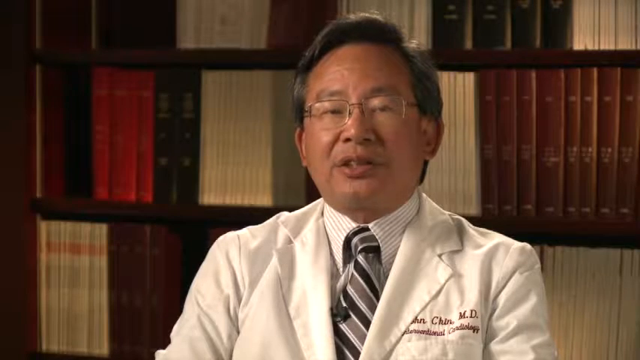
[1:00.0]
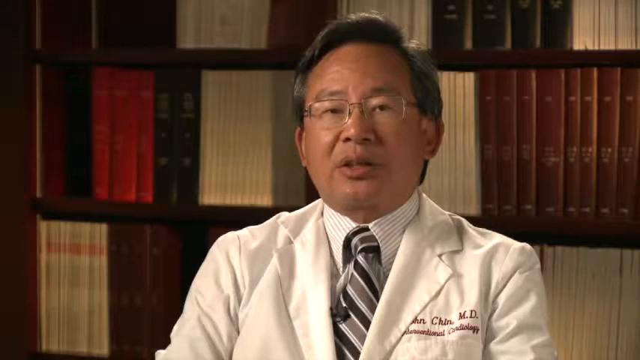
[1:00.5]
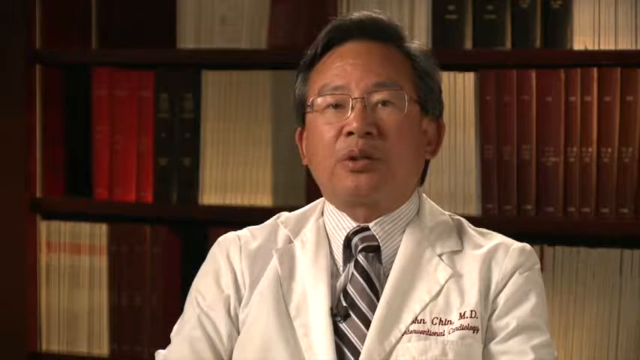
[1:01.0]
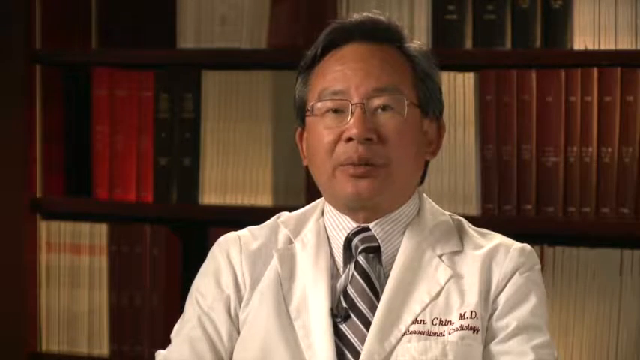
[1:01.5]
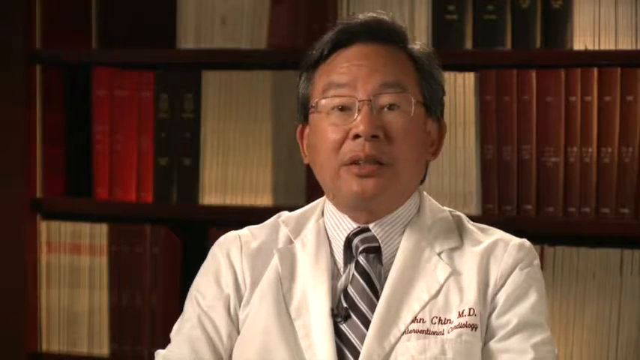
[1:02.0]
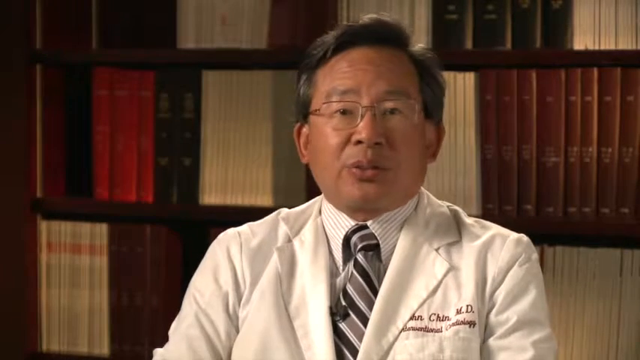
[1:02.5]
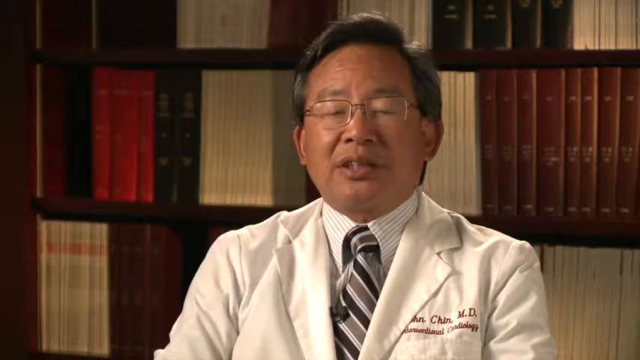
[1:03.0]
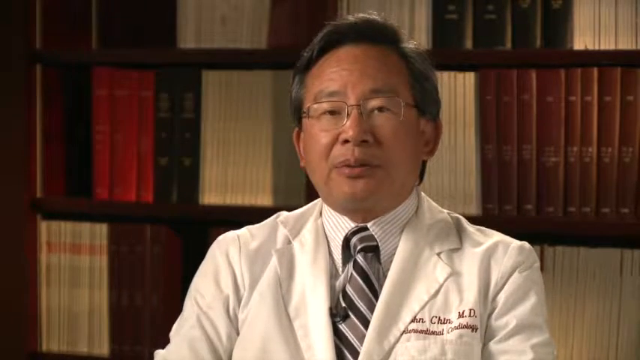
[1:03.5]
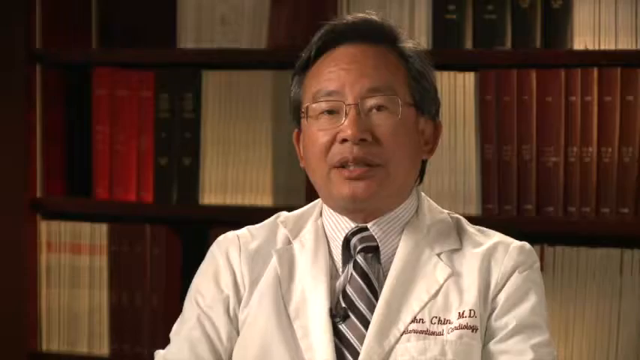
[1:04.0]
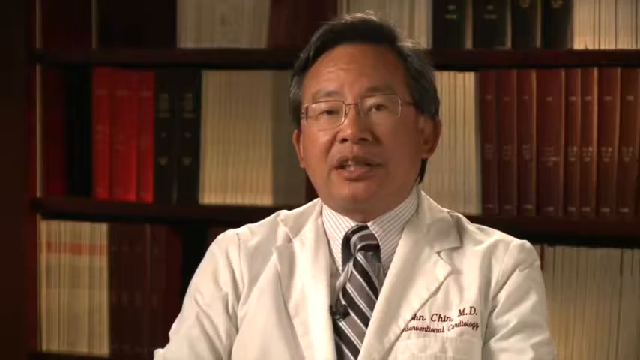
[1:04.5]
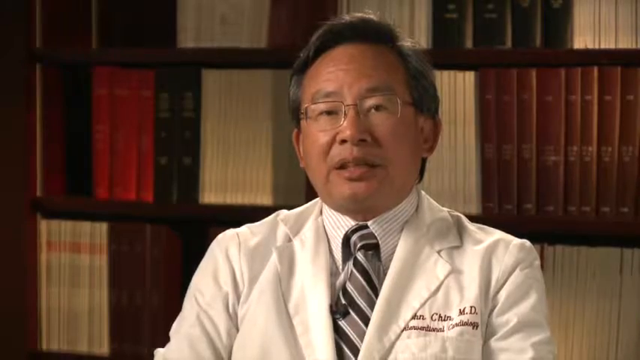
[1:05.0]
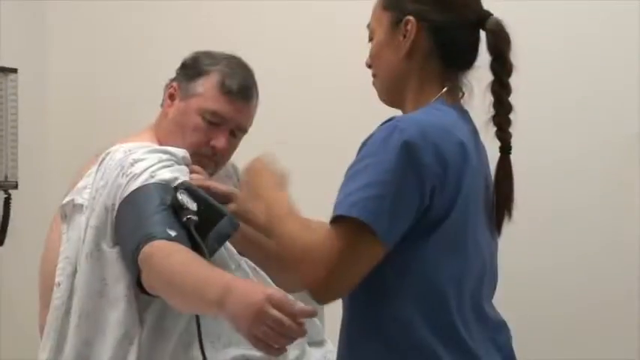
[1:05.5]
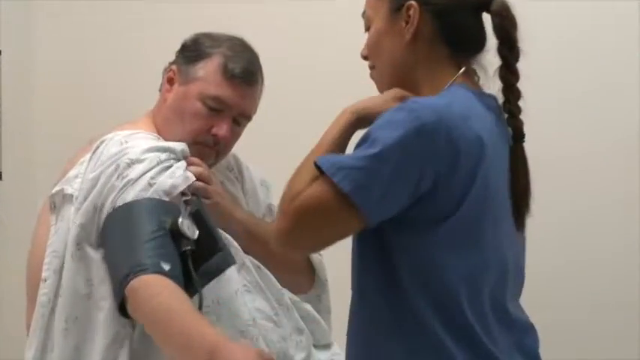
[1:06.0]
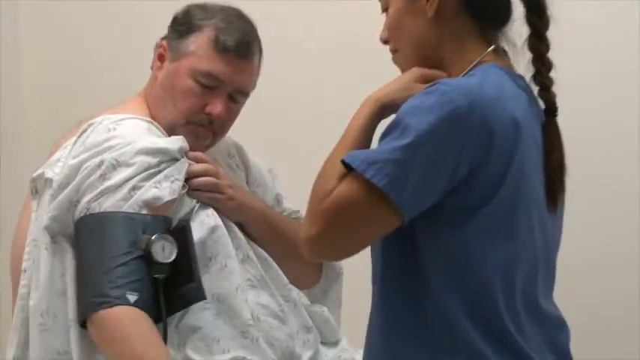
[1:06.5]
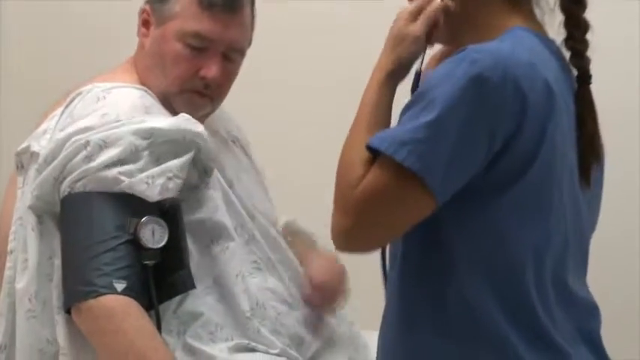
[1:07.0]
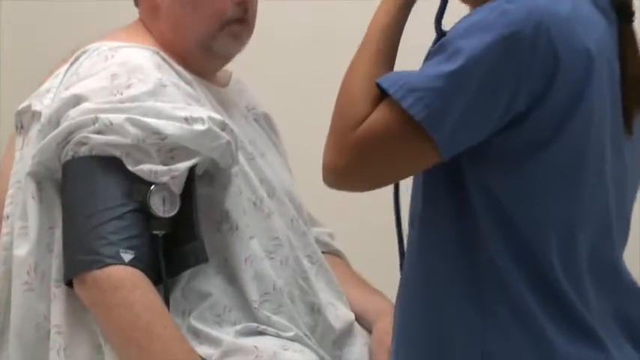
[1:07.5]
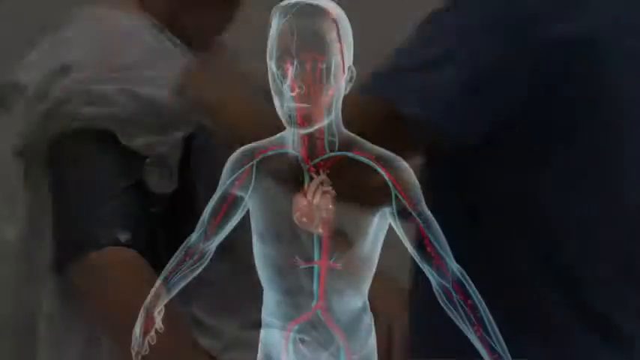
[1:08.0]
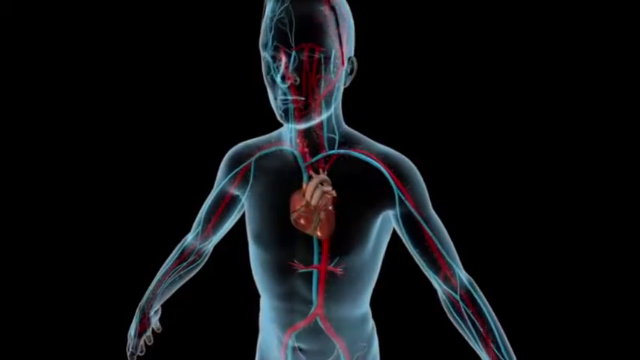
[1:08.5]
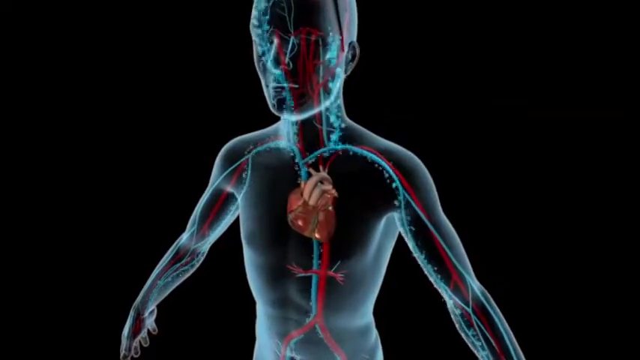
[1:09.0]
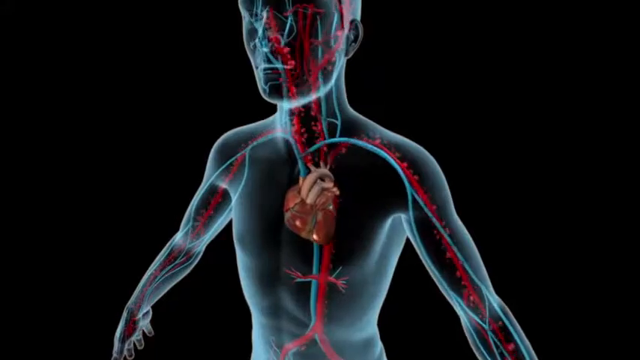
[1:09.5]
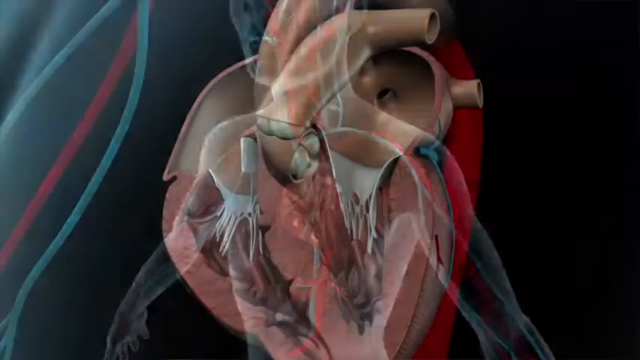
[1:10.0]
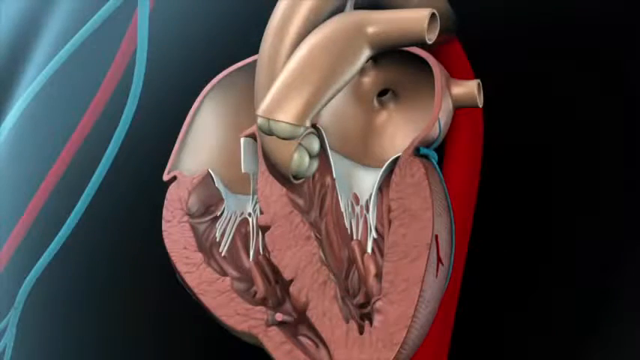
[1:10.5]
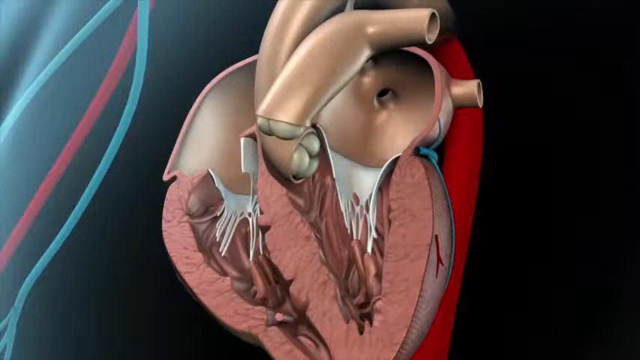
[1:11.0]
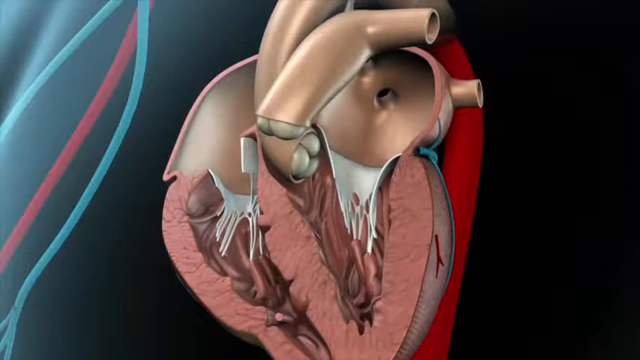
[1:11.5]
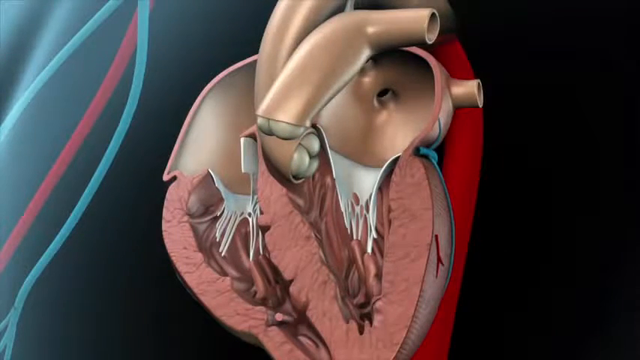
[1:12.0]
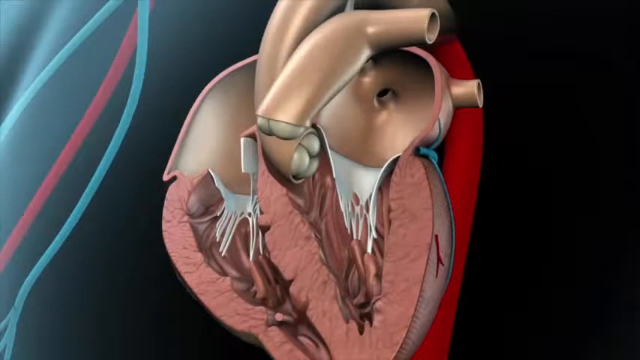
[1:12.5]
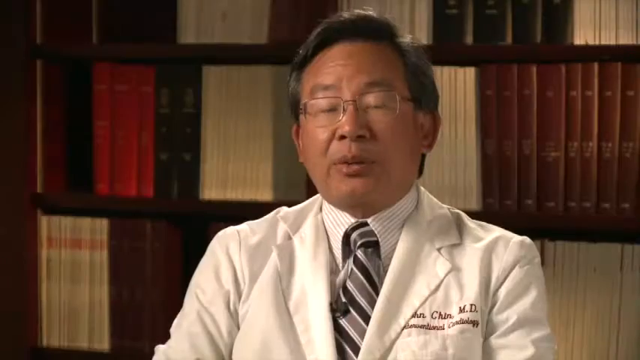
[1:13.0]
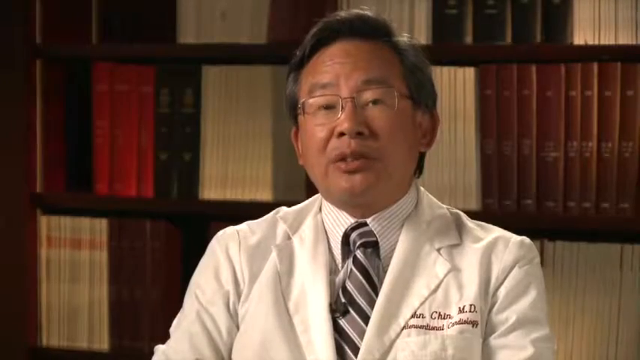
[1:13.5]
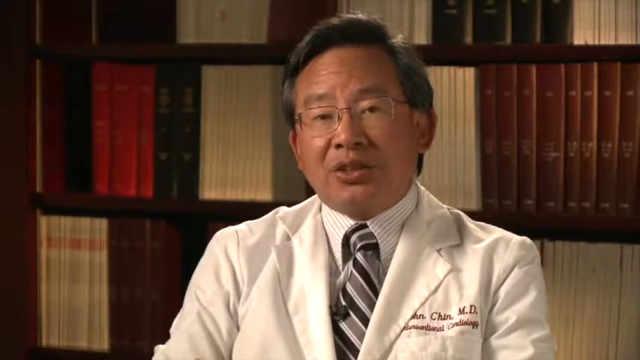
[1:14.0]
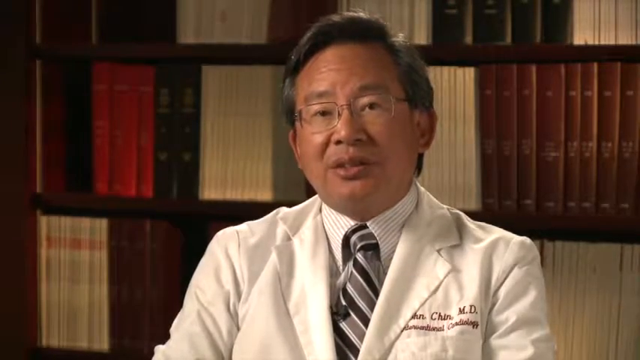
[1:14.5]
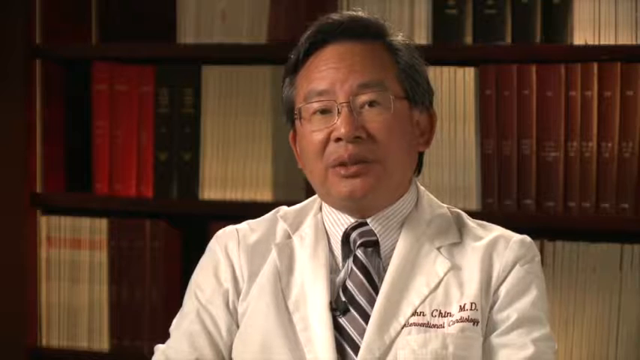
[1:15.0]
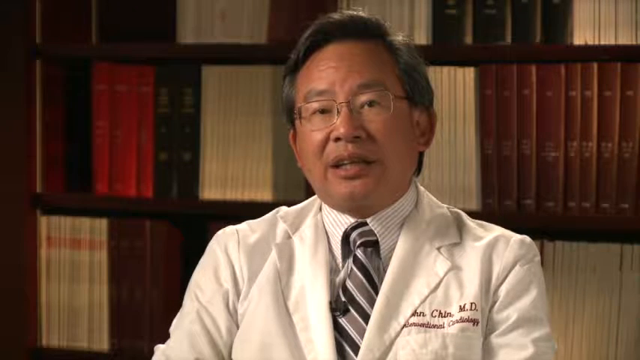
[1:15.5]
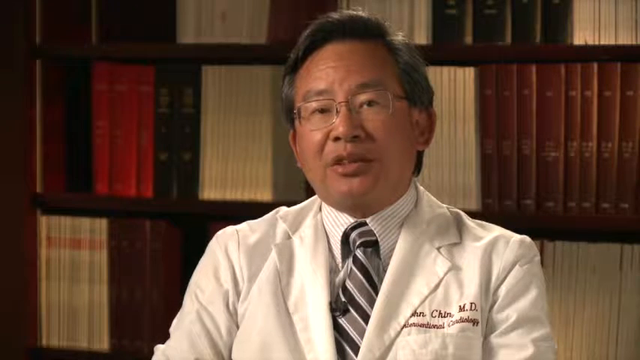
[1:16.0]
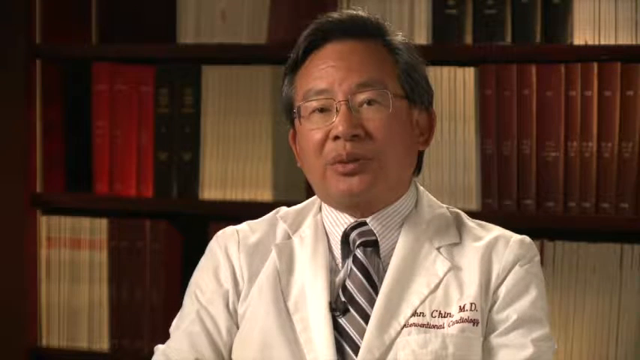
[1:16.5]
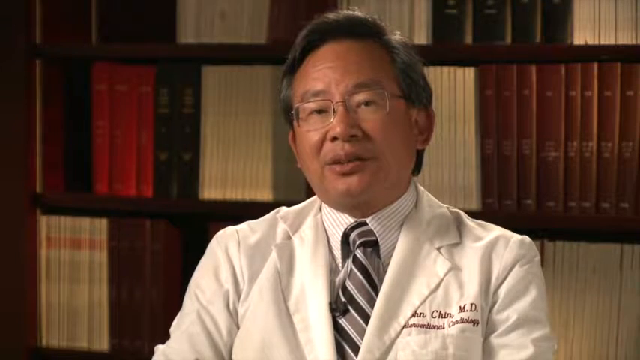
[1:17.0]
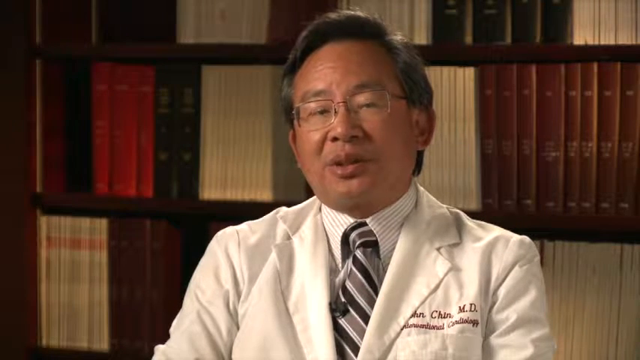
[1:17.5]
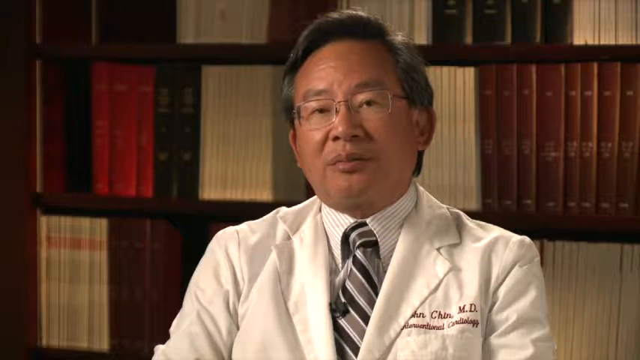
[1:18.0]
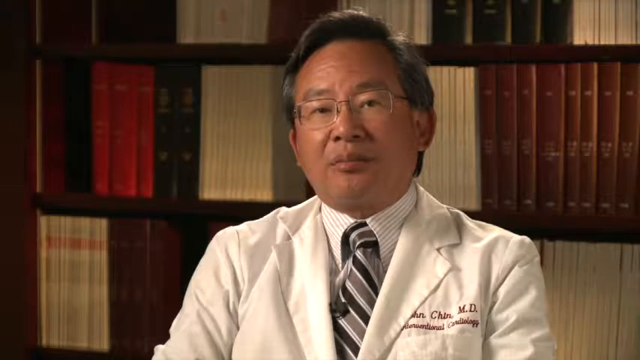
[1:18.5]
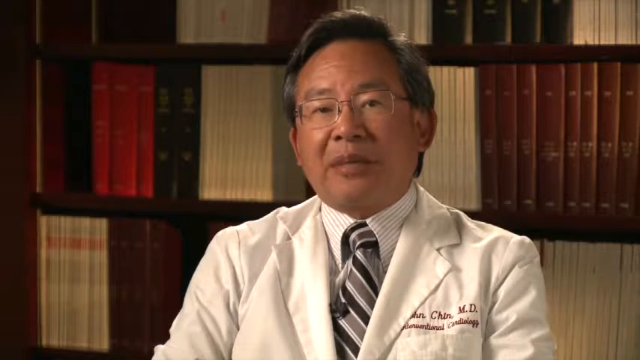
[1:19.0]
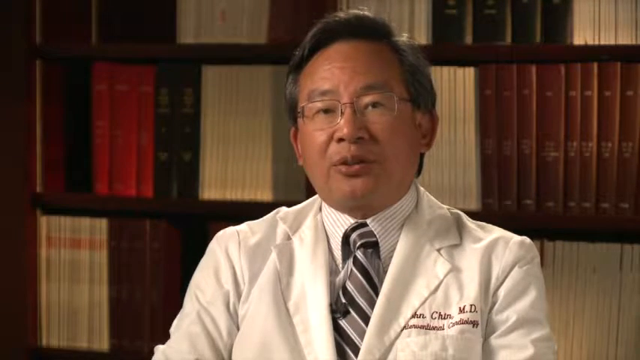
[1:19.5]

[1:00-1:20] A doctor is sitting in his study with books behind him. He wears the traditional white coat and sits facing the camera, speaking. He is only visible from the shoulders up, and his hands cannot be seen. After he speaks for a couple of seconds, the shot fades to a video of a nurse wearing blue scrubs on the right-hand side and a man in a hospital gown on the left-hand side. The nurse wraps a blood pressure cuff around the patient's arm, then moves her hands back and up to her neck where the stethoscope is and puts the stethoscope in her ears. Next comes an animation of blood flow in the body on a black background. The body itself is translucent, with models of blood vessels, the heart in the chest, and blood vessels going up to the brain, down to the lower body and through the arms. The animation alternates between showing blue oxygen-poor blood and red oxygen-rich blood. This fades, and a diagram of the internal chambers of the heart appears; the heart looks as if it has been cut in half, revealing the inside.